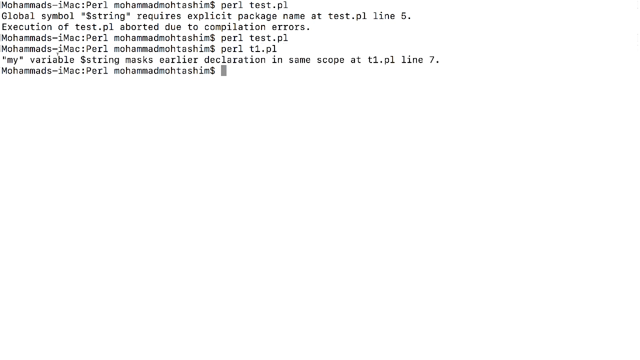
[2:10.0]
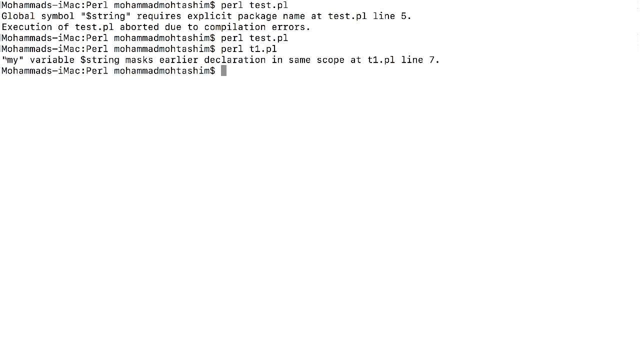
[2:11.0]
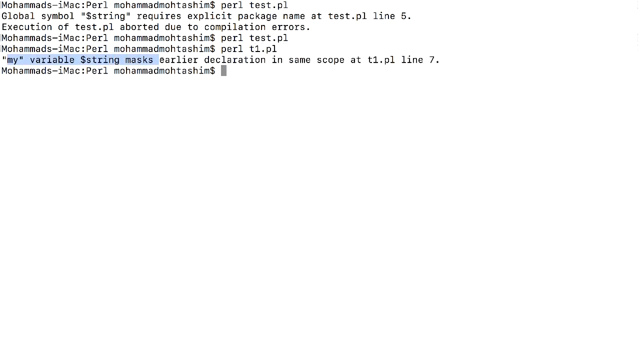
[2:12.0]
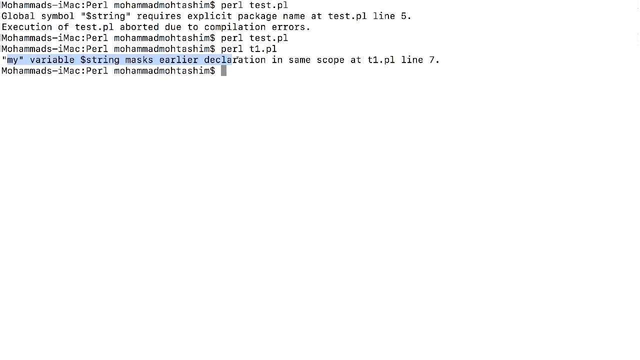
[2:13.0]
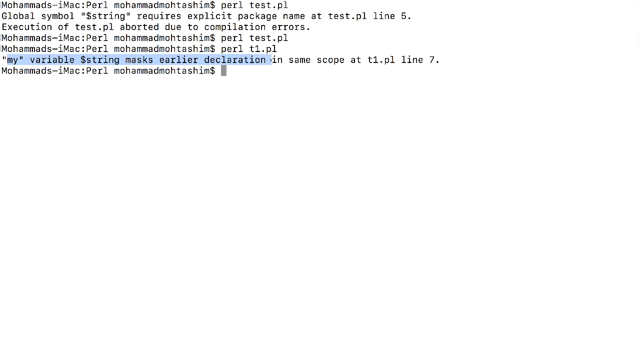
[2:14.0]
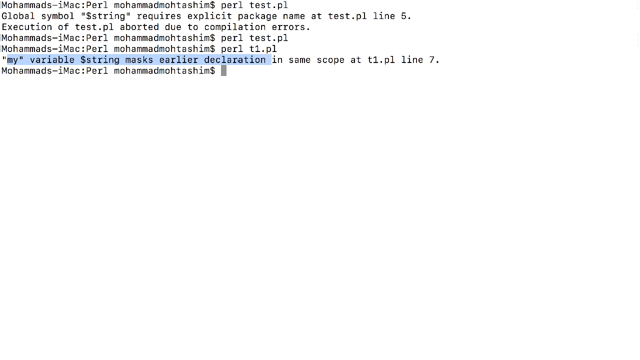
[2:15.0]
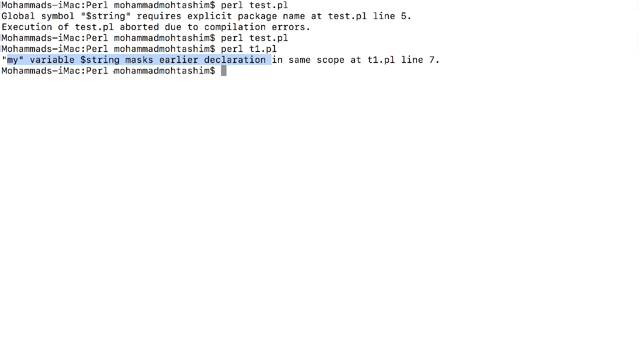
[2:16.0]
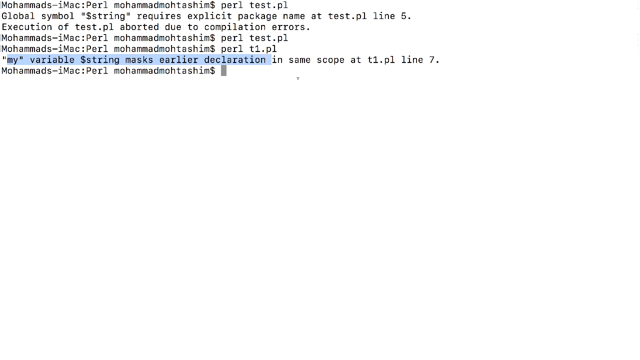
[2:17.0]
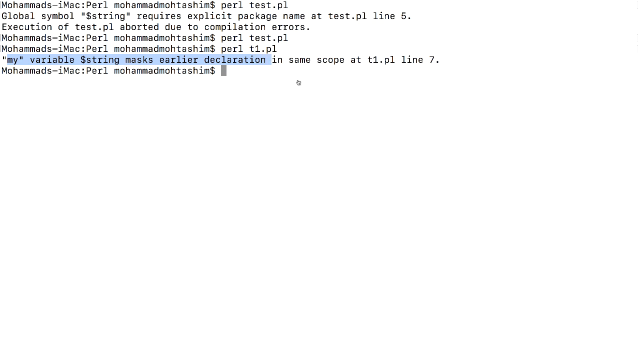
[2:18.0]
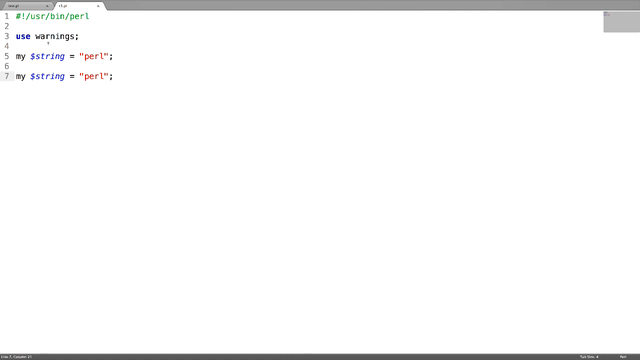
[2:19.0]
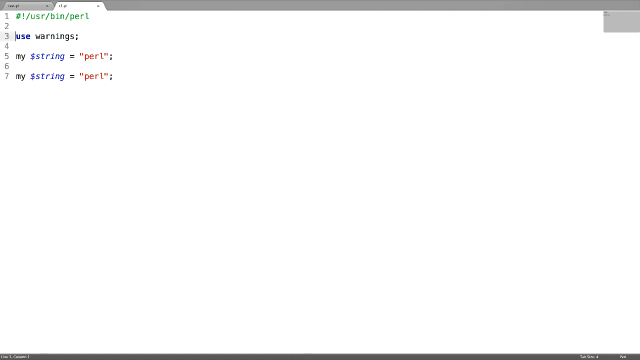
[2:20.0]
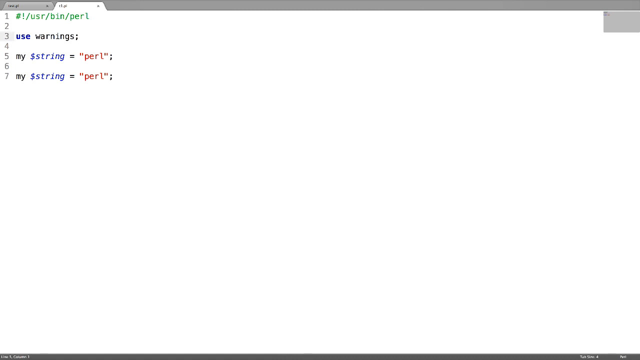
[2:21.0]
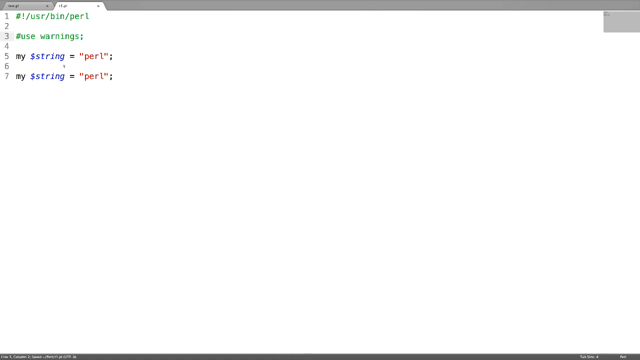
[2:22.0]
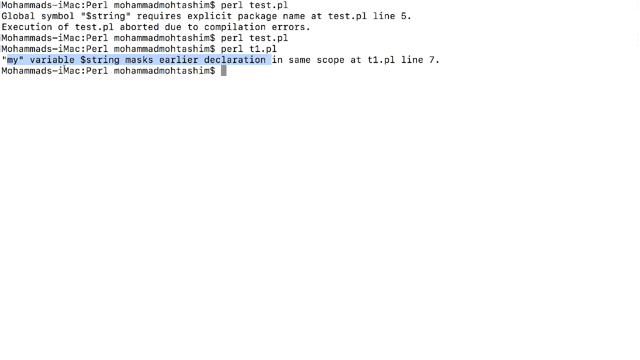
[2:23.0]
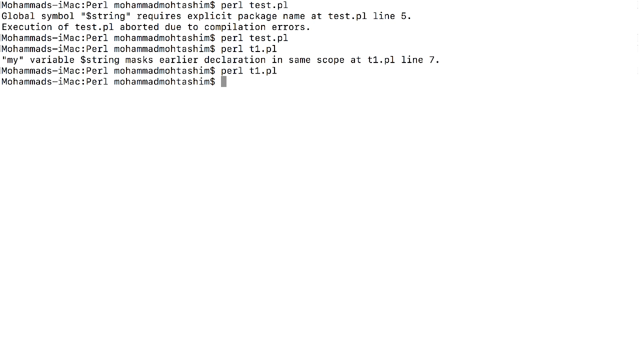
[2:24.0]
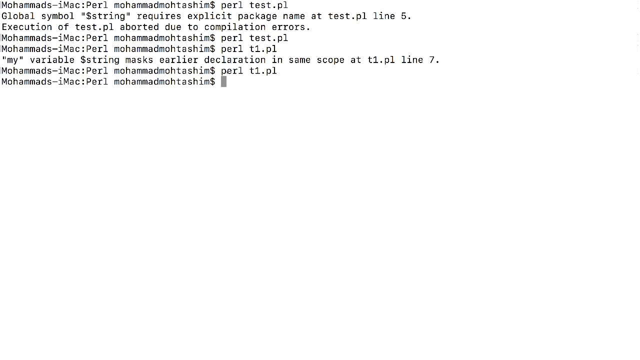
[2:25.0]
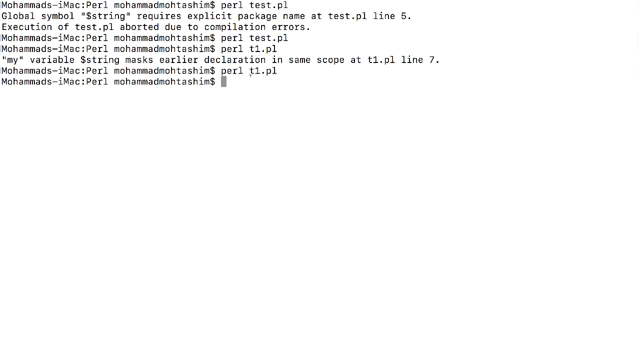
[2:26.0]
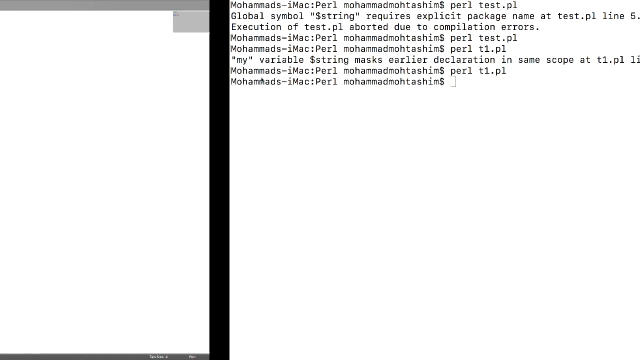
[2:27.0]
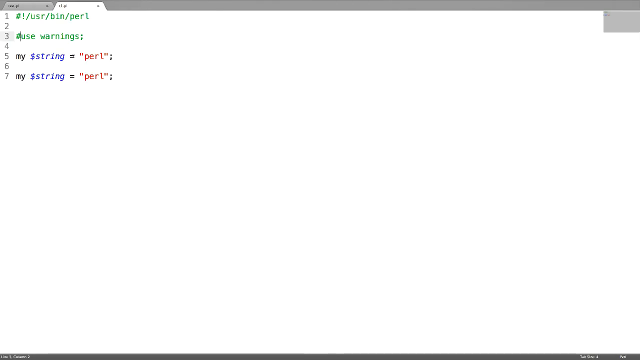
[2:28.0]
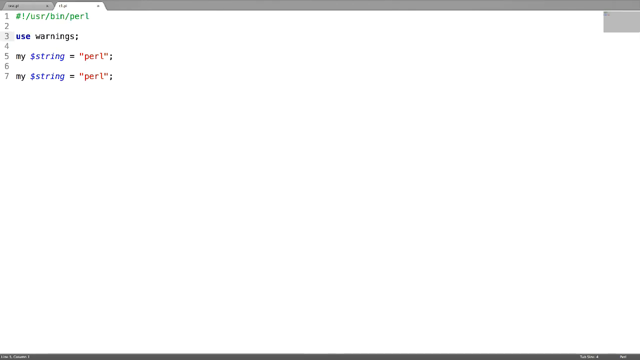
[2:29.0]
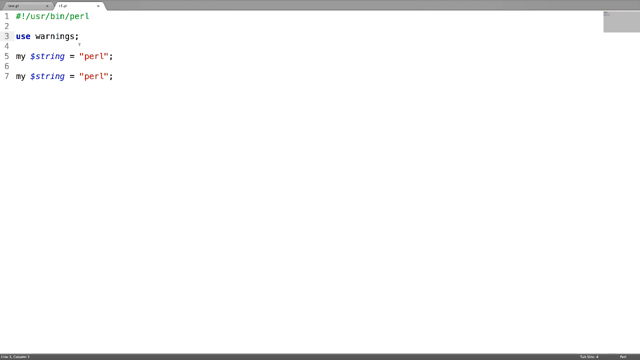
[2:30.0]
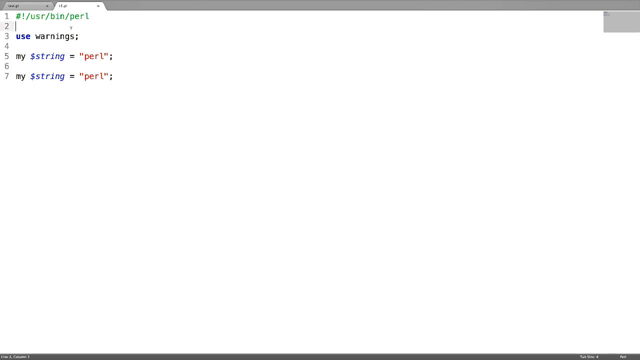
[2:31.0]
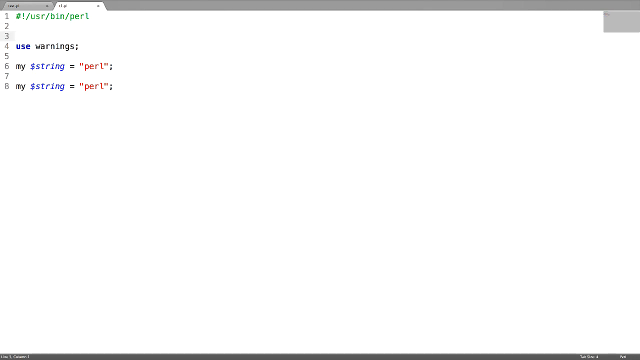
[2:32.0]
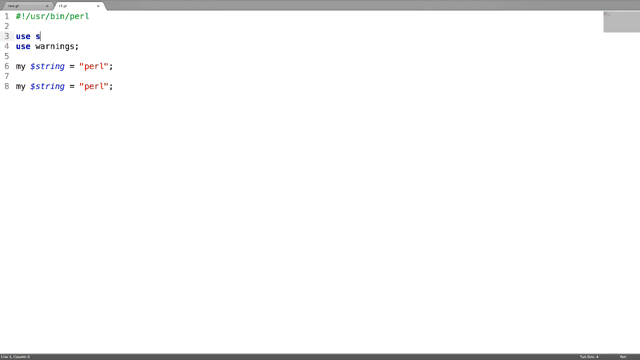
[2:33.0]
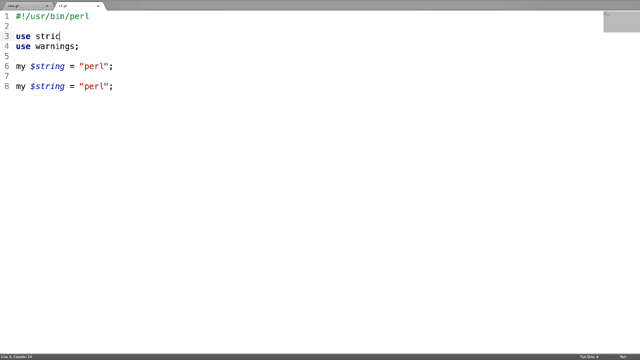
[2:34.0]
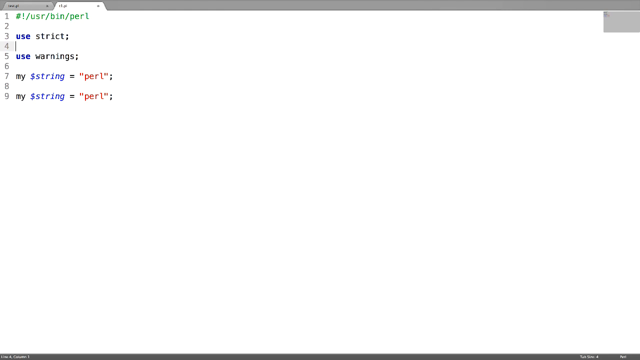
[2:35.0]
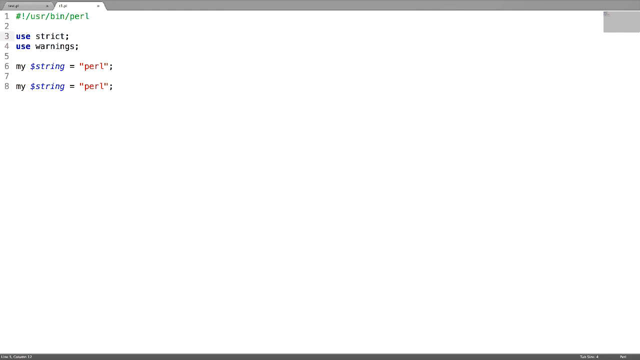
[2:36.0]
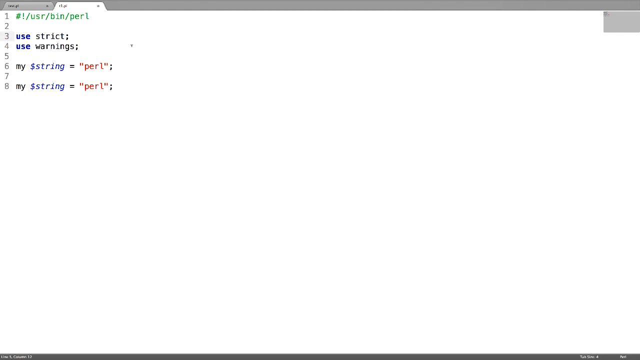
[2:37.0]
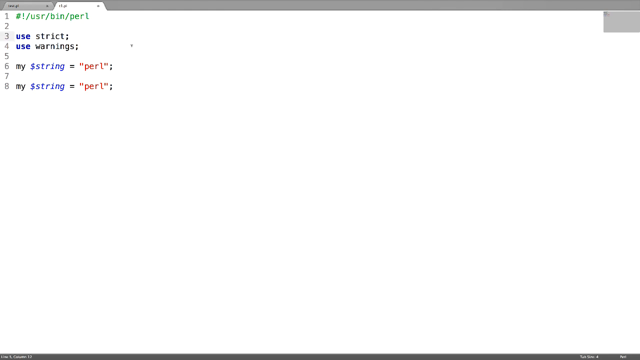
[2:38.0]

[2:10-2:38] The user highlights some of the words on the screen in blue. The screen glides over to the right and then back to the left. It continues to change, switching from the white tab to the blue tab and moving from left to right as it does; the screen is moved from left to right several times in a row. The cursor moves down the screen a bit and pulls up a pop-up box, then moves down the box, and each word in it highlights in light blue as the cursor glides over it.